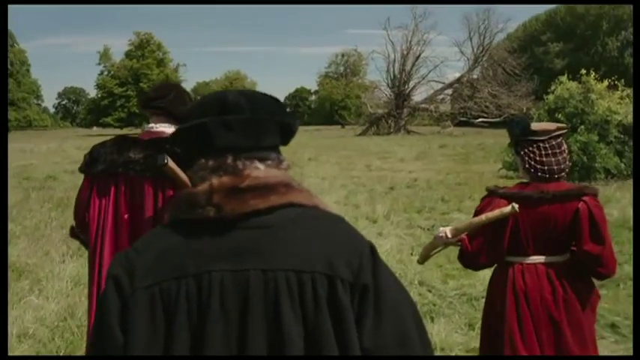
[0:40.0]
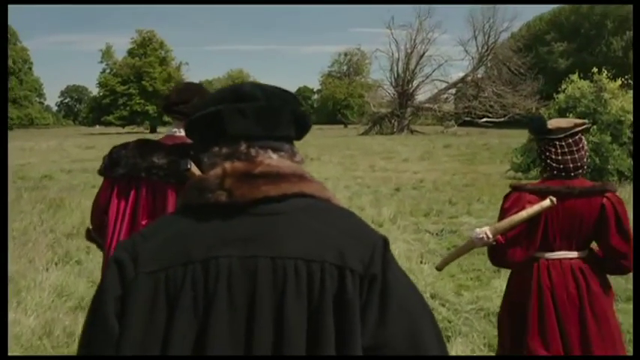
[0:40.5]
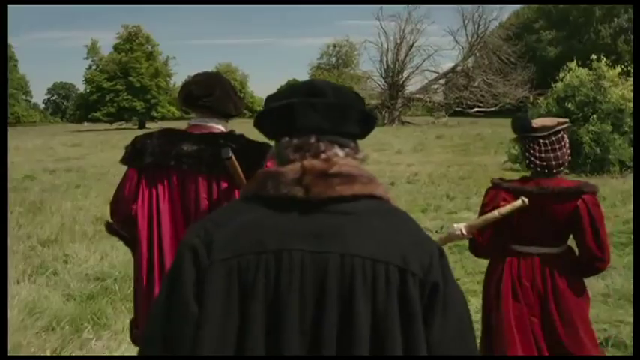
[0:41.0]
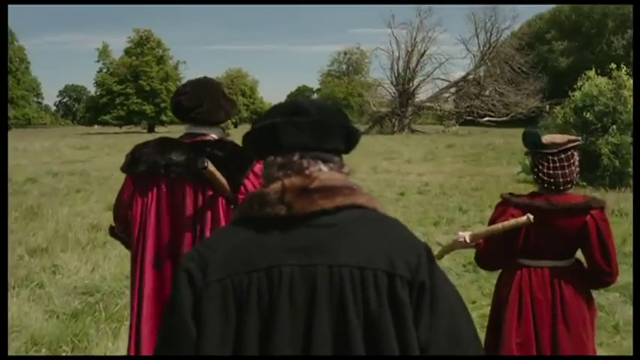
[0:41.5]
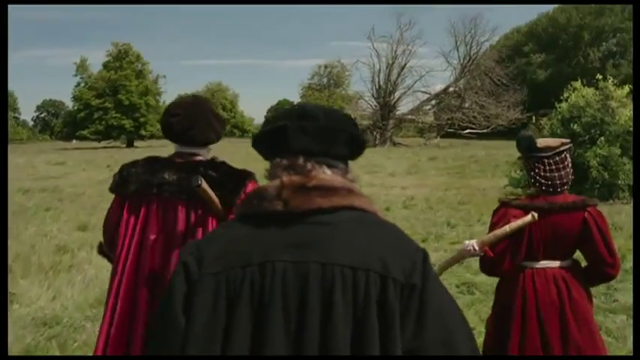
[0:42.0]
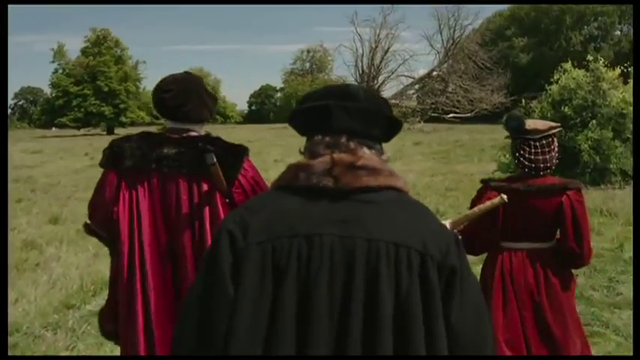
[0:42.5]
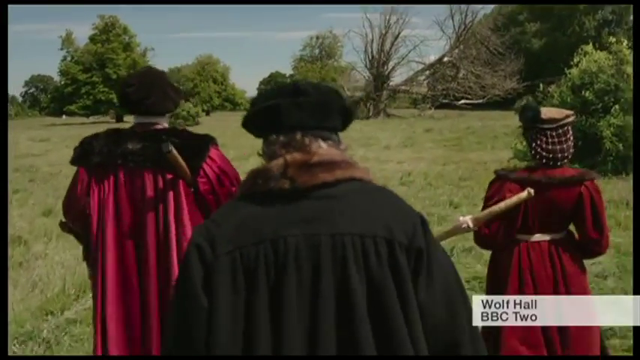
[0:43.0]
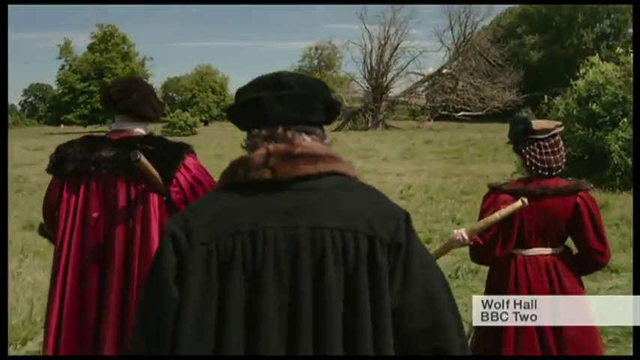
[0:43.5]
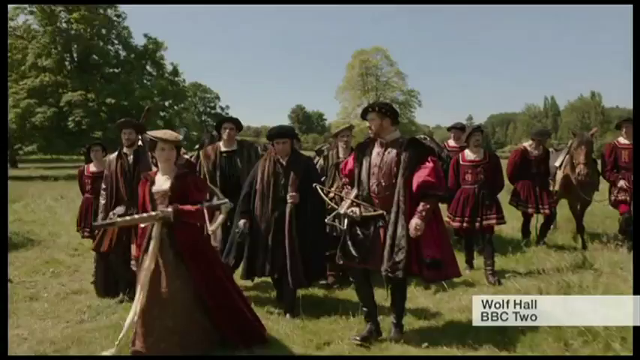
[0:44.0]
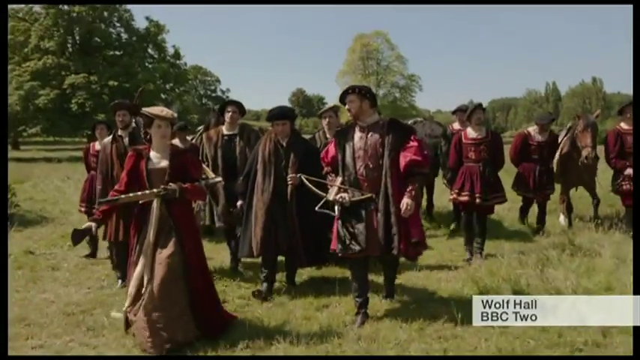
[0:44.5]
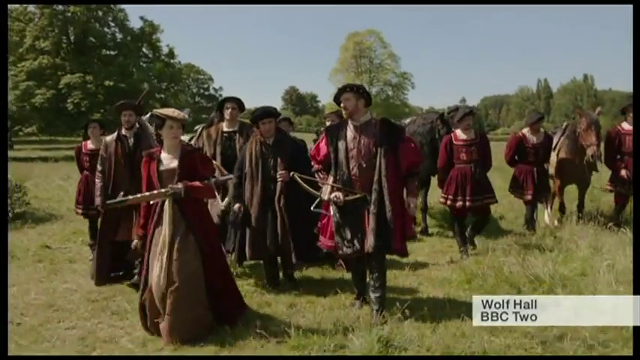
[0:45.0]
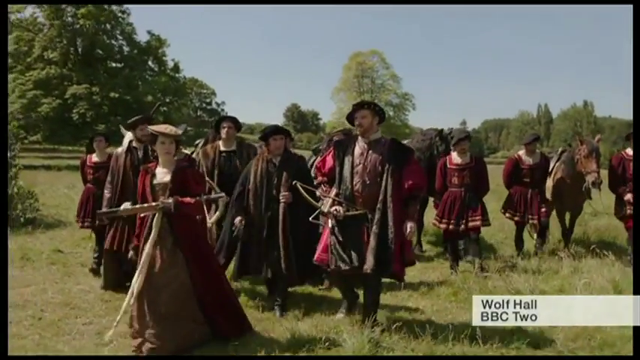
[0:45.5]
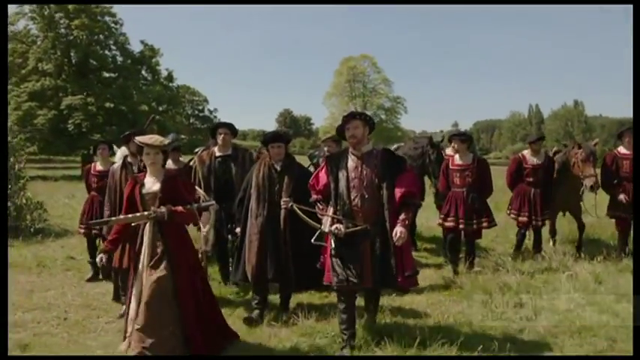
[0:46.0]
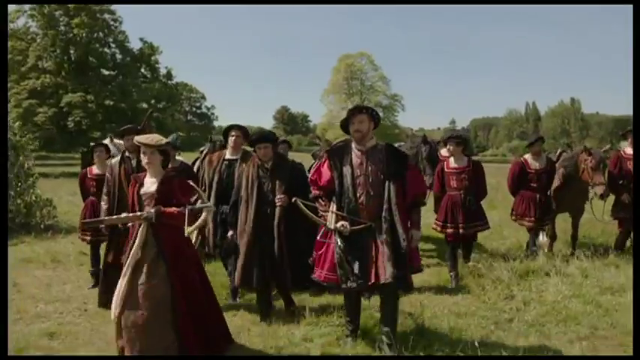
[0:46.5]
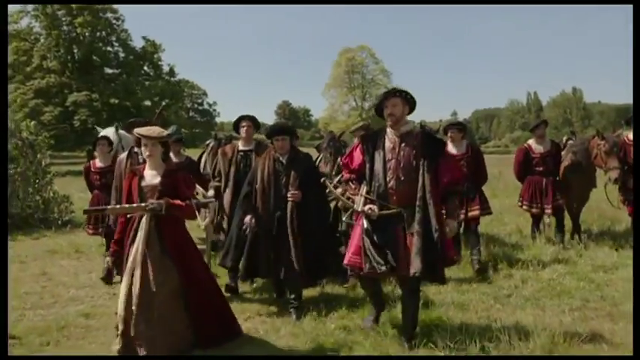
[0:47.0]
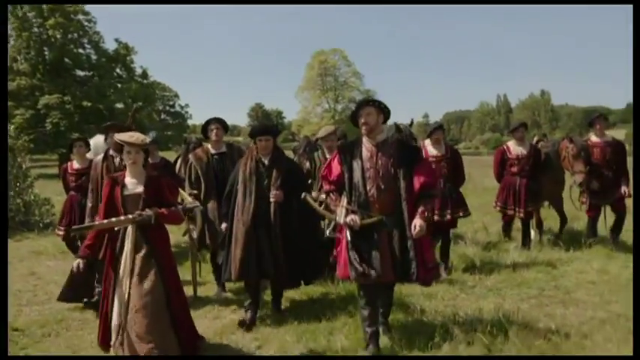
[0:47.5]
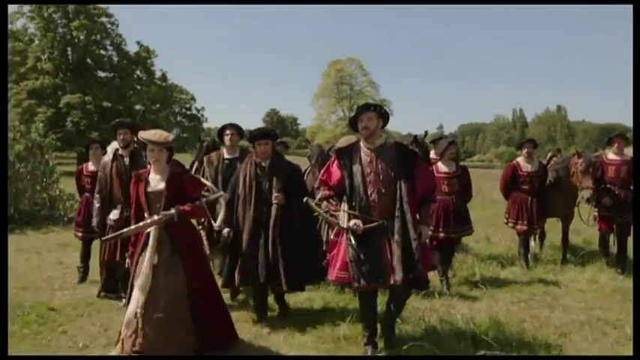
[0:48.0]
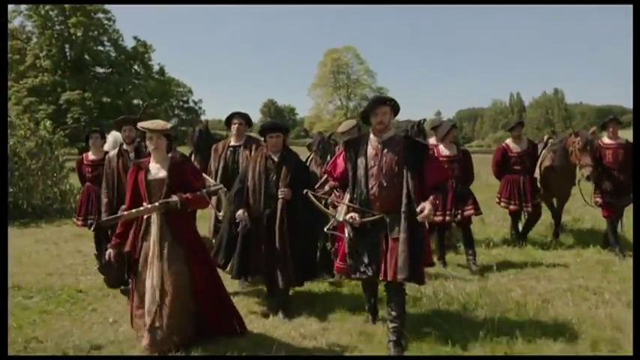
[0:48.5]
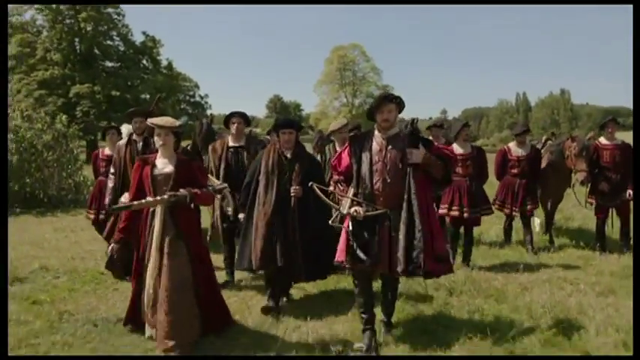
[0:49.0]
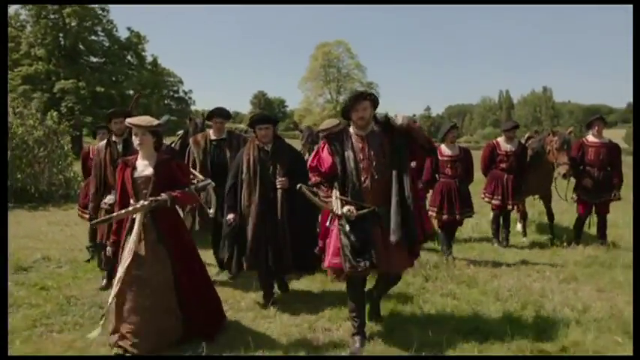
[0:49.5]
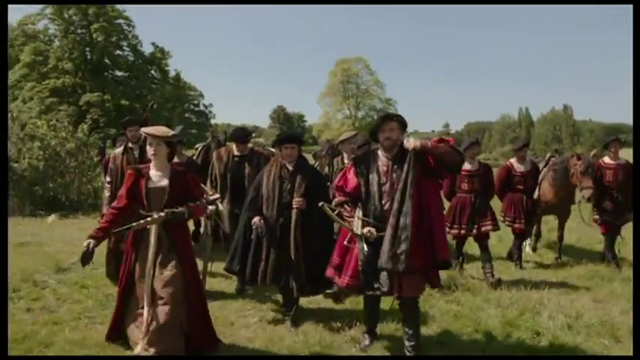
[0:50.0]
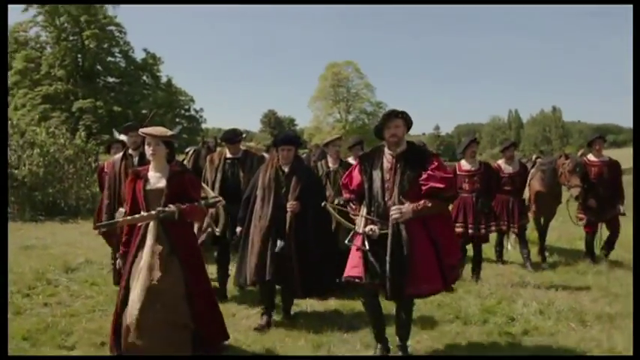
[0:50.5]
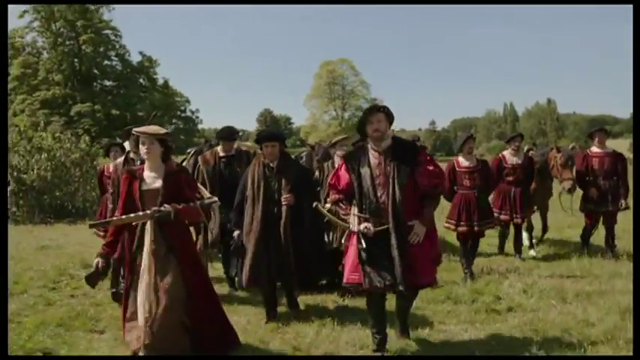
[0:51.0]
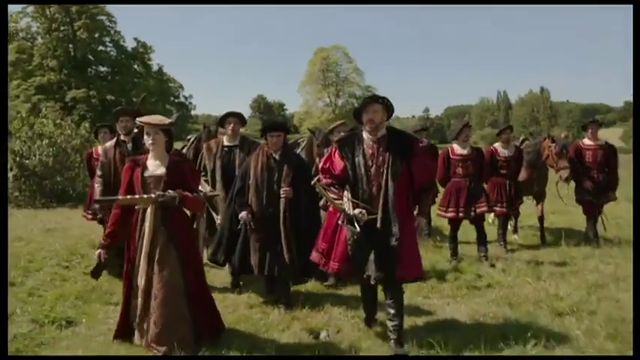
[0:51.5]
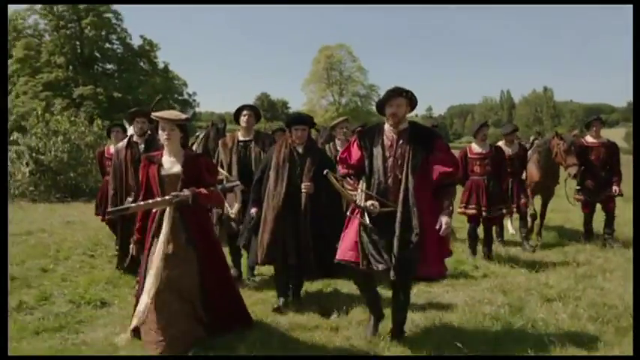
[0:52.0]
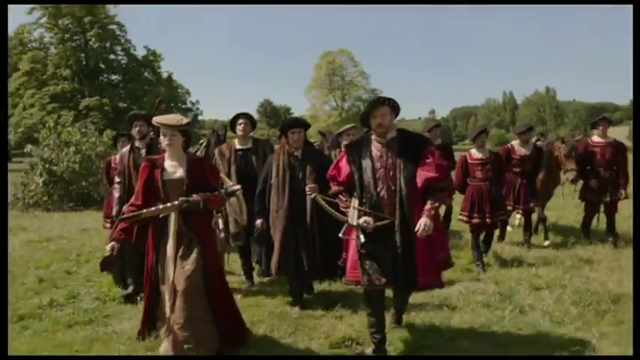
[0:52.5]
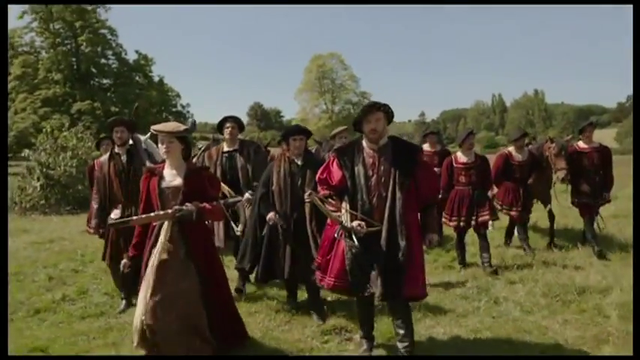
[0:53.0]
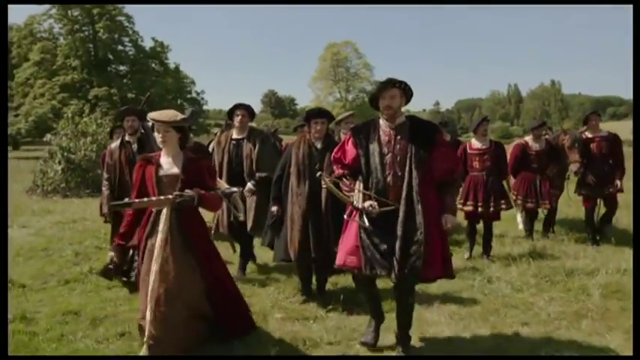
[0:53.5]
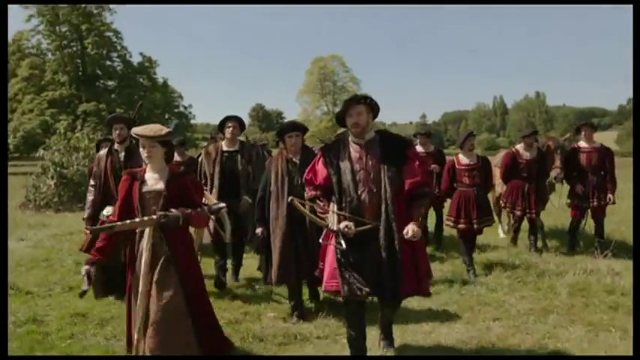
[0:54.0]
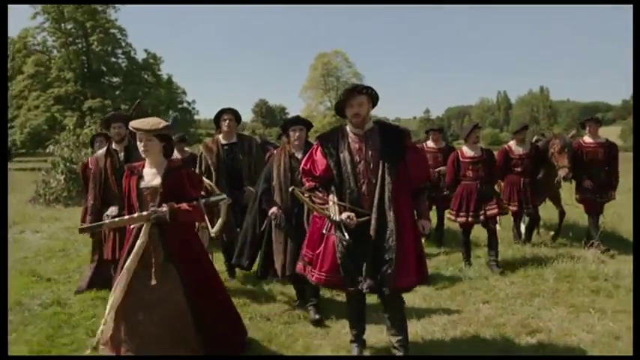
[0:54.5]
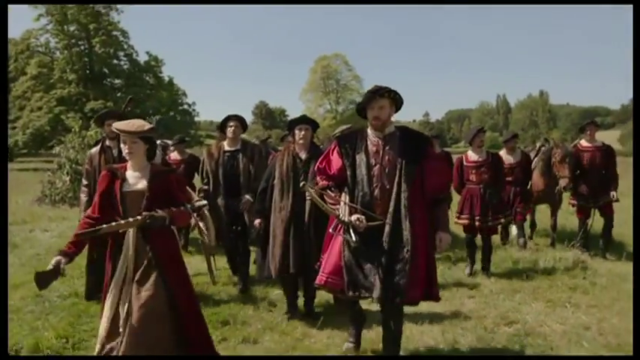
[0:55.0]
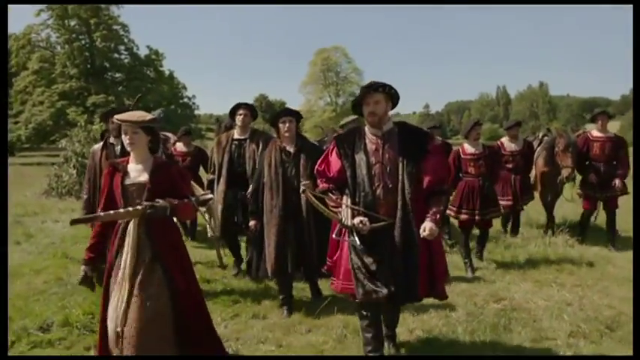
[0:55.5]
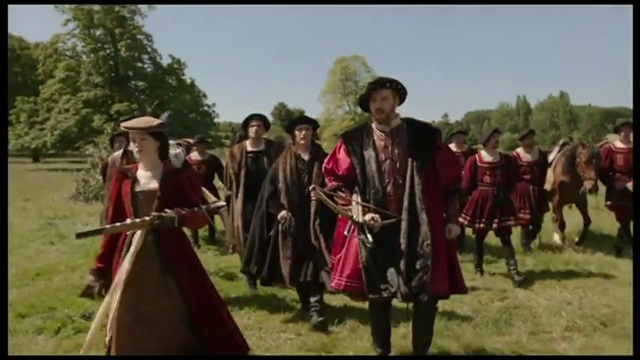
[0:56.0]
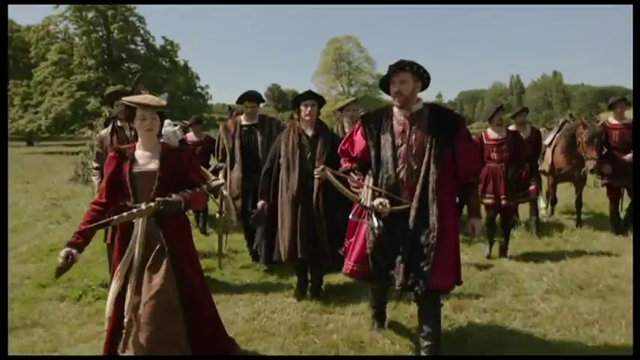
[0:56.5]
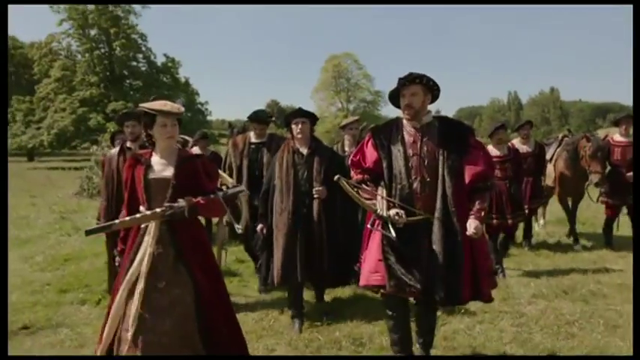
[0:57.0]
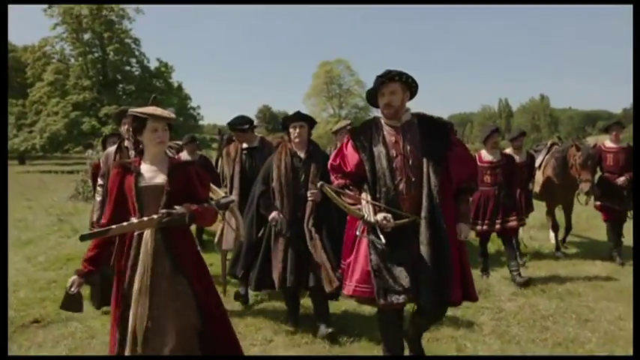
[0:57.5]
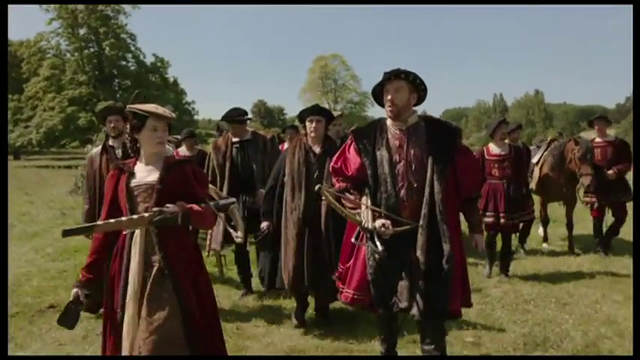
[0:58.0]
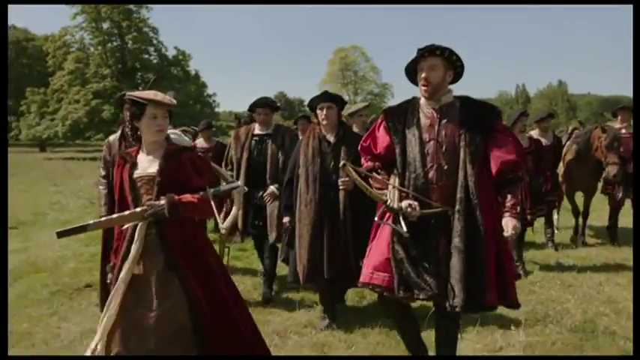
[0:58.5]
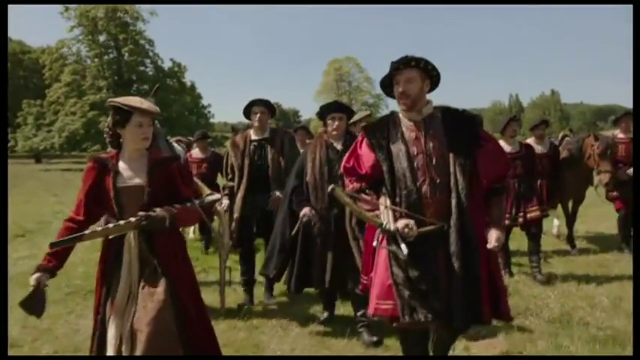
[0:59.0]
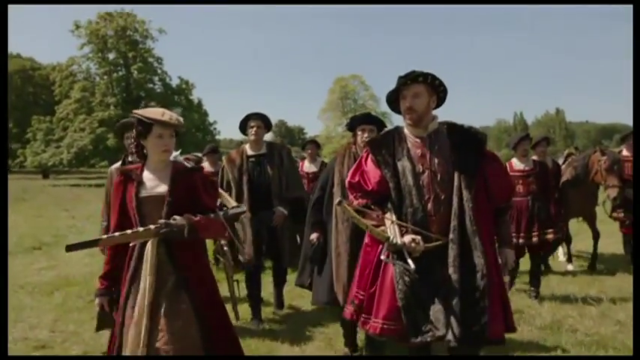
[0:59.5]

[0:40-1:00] What seems to be a king and a queen appear with a lot of soldiers. They wear traditional black and red clothing and hats, and hold weapons. They are in an open field with many trees, green grass and a long, big field, talking and walking through the field.